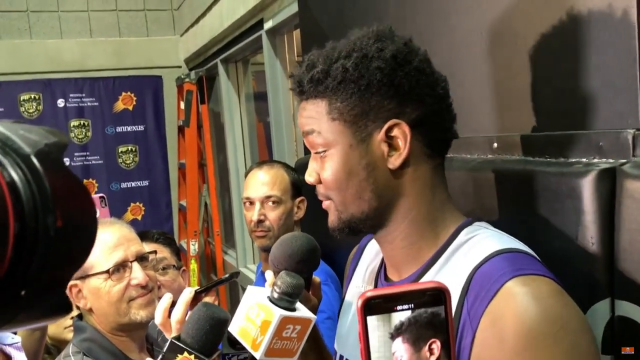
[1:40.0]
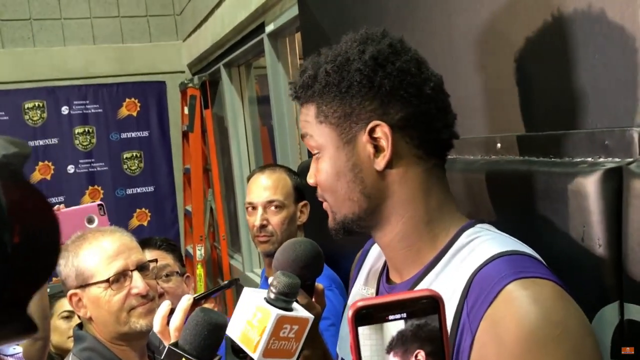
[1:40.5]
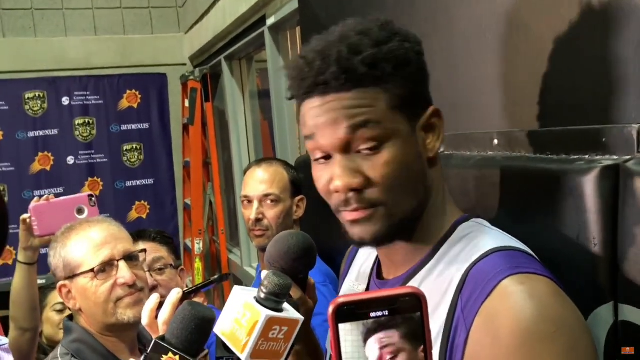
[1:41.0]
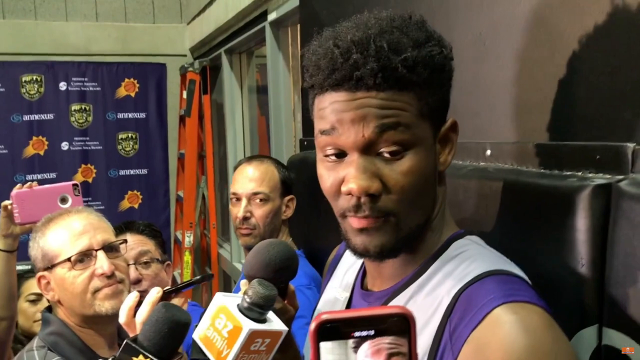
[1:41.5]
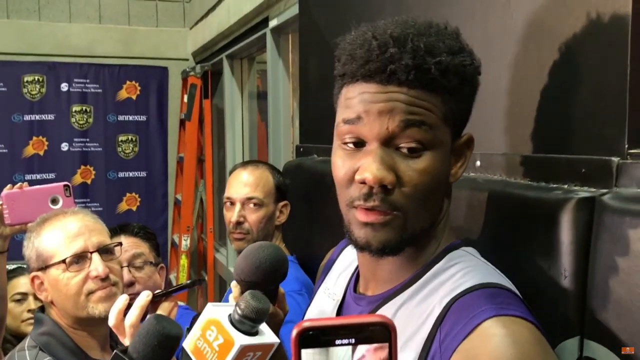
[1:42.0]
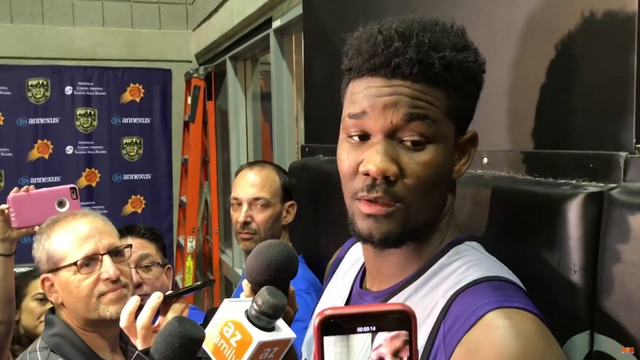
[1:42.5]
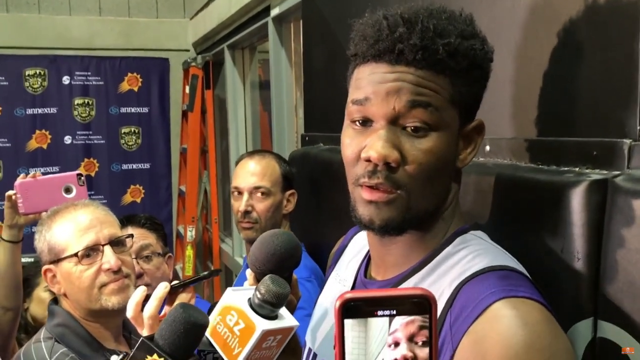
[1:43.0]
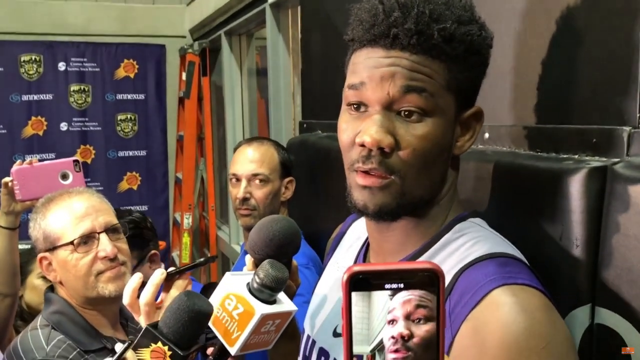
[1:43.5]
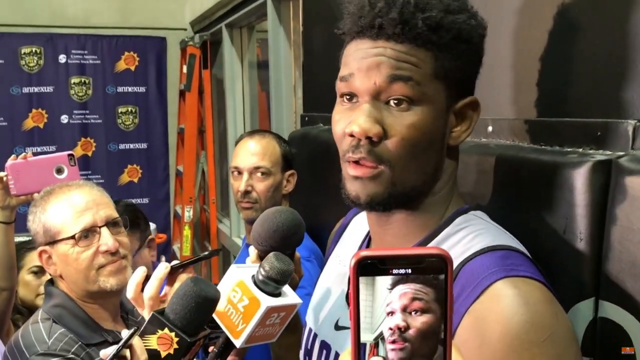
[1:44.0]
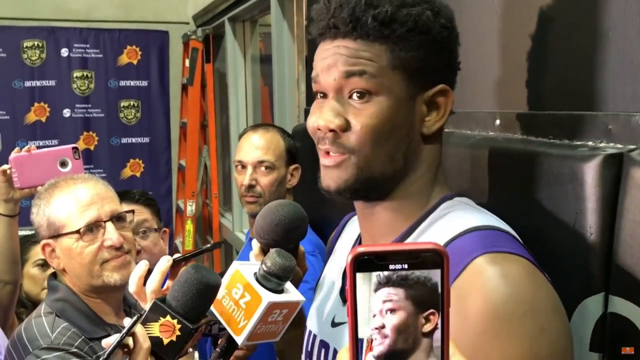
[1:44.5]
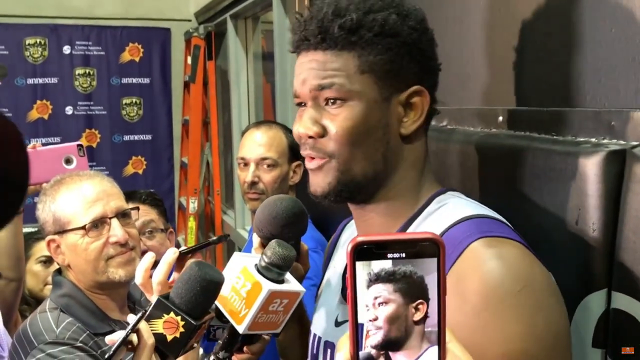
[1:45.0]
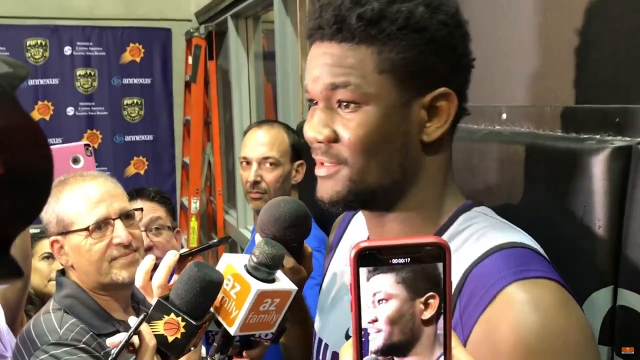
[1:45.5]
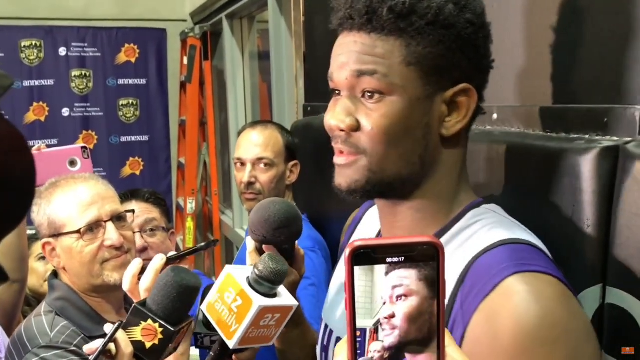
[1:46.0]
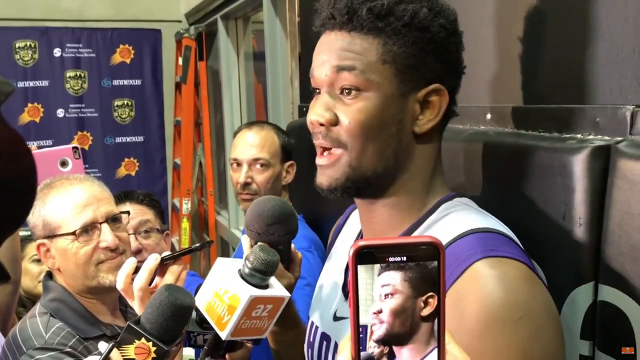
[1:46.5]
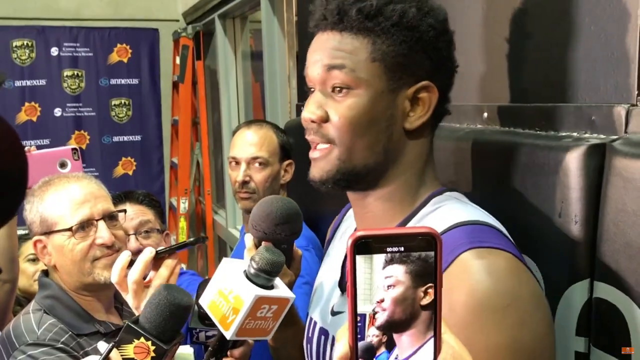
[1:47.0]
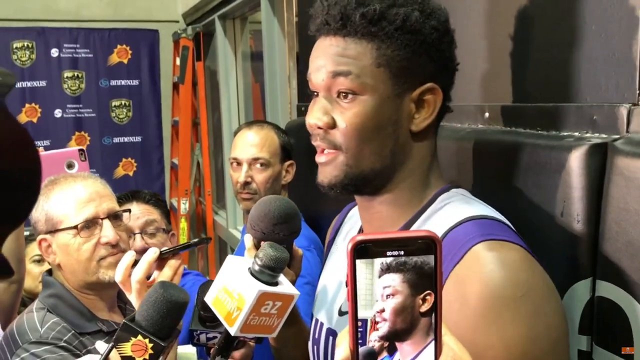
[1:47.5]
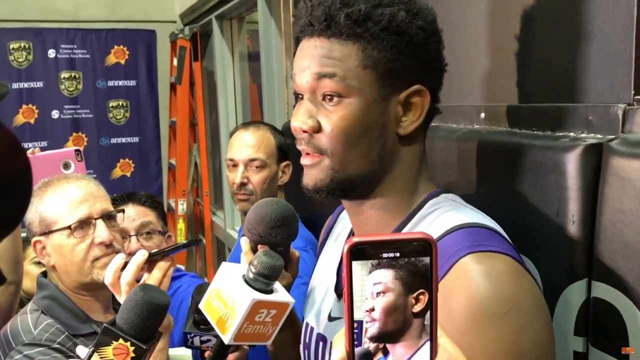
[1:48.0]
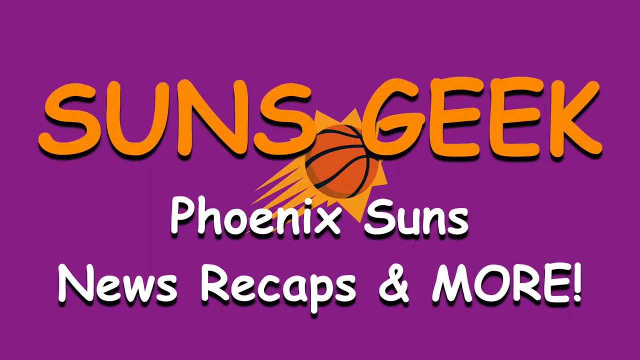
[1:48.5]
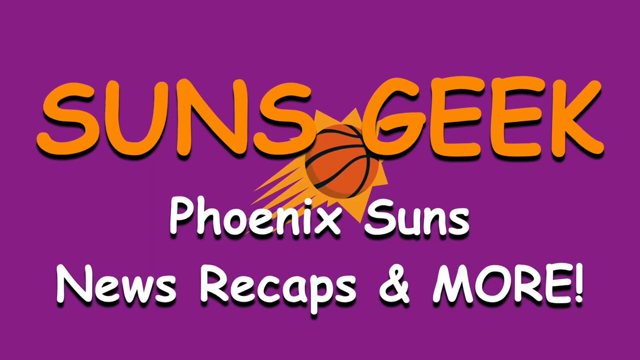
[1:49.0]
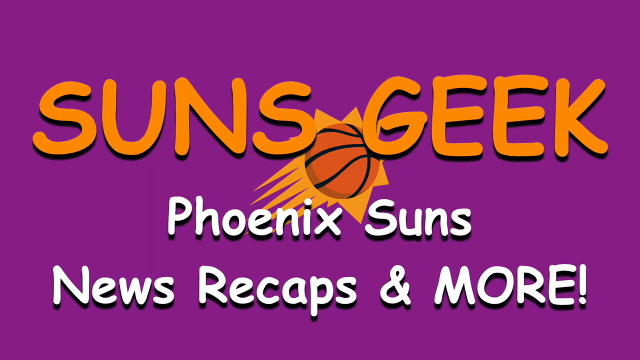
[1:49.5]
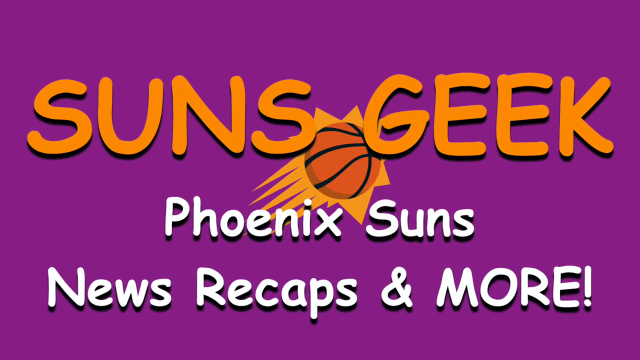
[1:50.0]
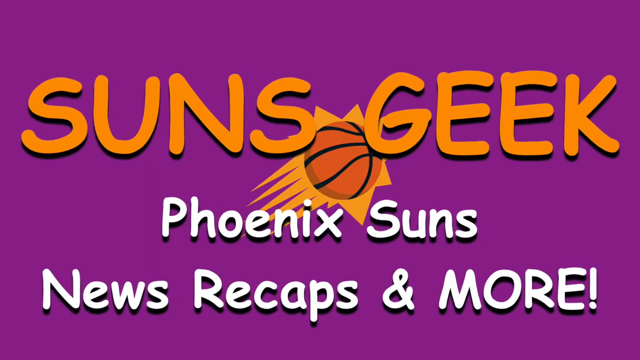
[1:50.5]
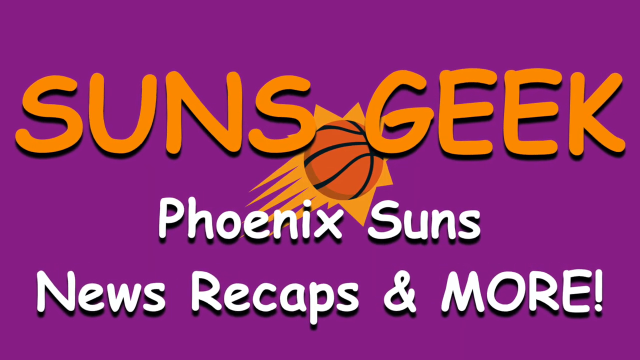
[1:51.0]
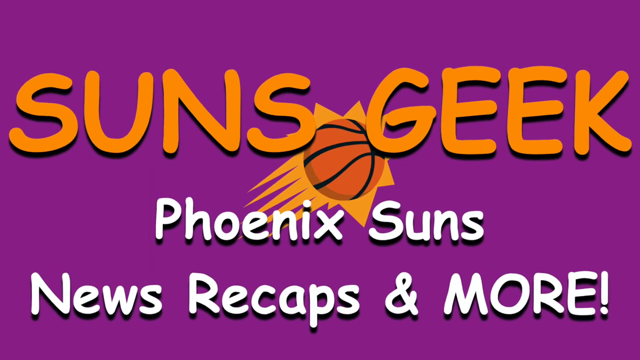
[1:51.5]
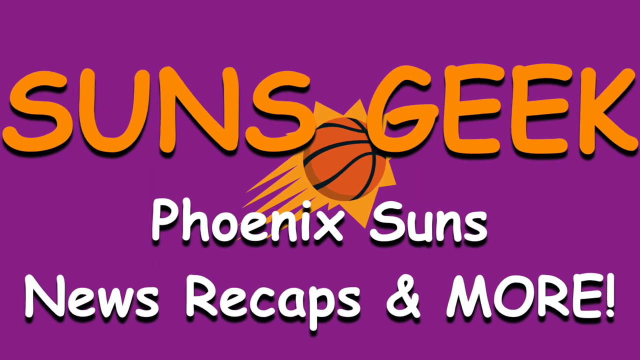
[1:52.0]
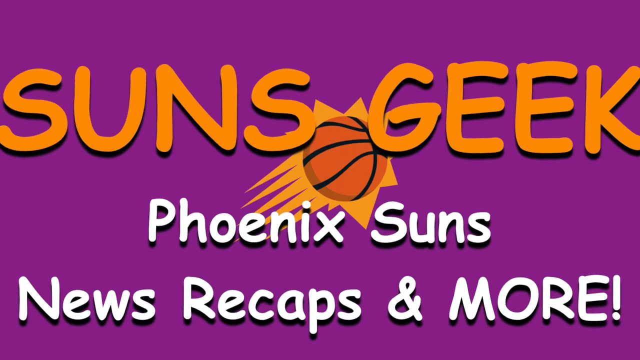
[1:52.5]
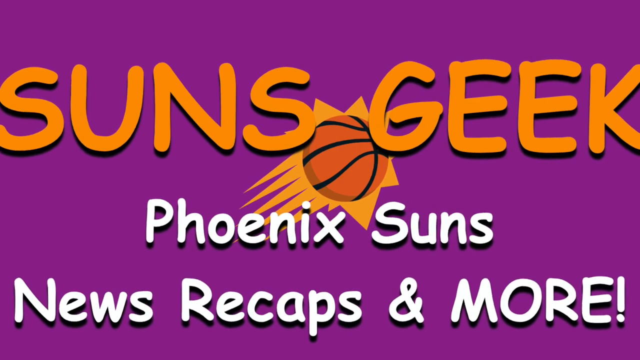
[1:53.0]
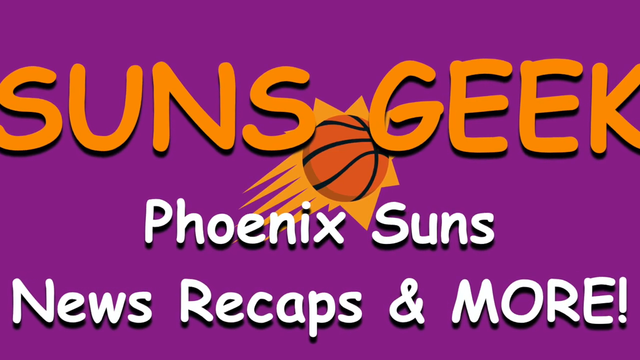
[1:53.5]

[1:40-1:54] A basketball player on the right side gives a press conference. In the bottom left, many people are recording him and holding microphones; two men can clearly be seen looking at him, and more people are in the background to the left. A woman holds up a pink phone. The scene changes to the text "Suns Geek Phoenix Suns news recaps and more" in the middle, with the Phoenix Suns logo, a basketball that looks like a sun, in the middle on a purple background.